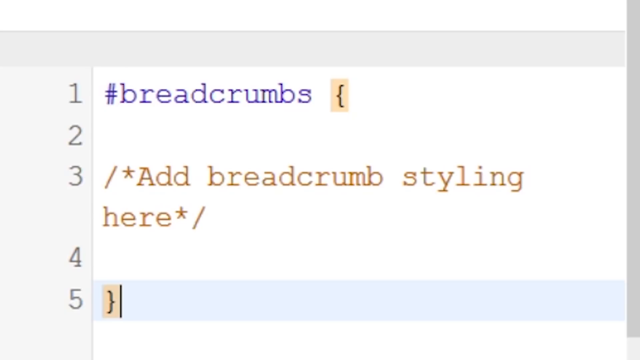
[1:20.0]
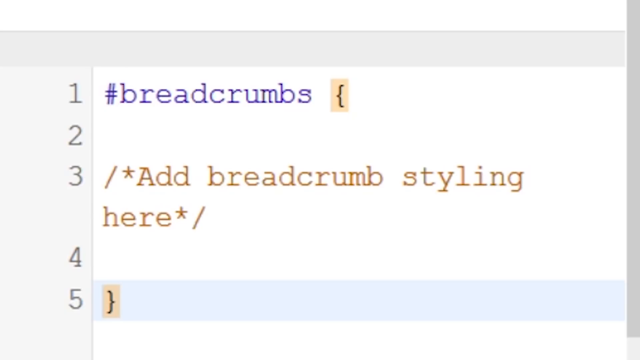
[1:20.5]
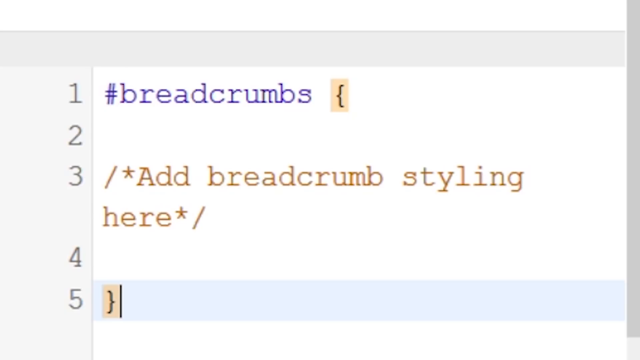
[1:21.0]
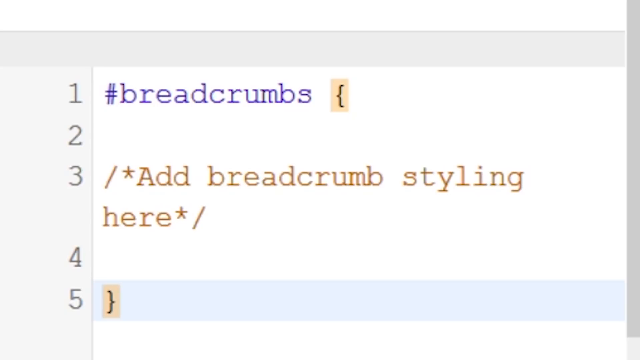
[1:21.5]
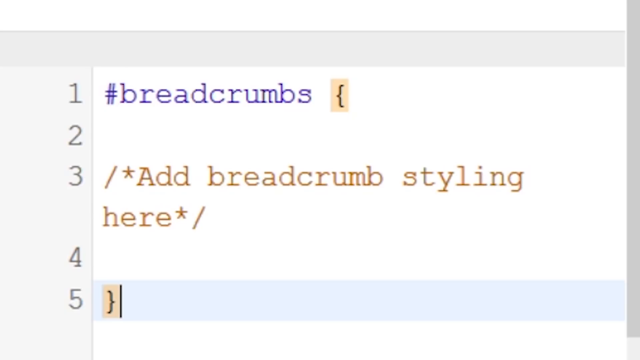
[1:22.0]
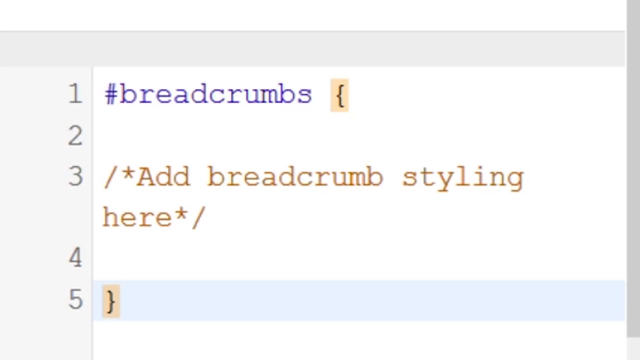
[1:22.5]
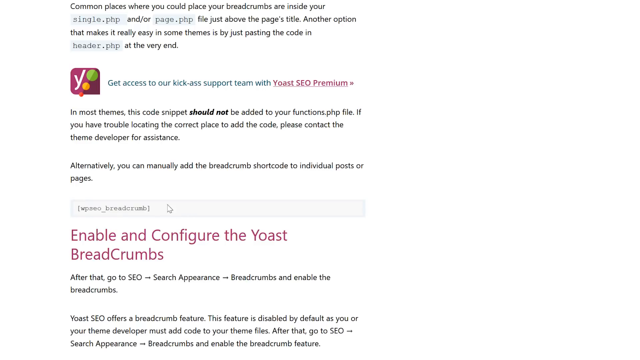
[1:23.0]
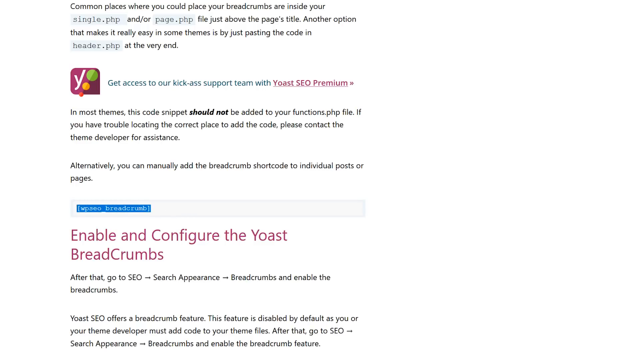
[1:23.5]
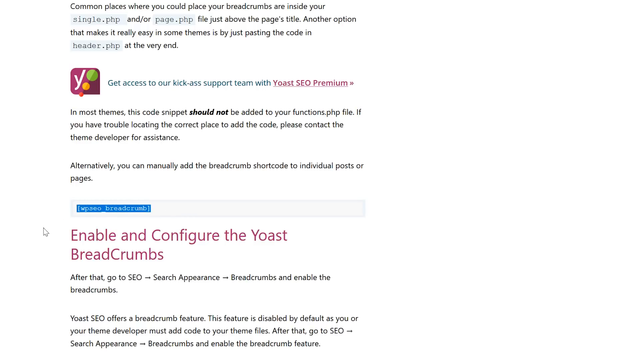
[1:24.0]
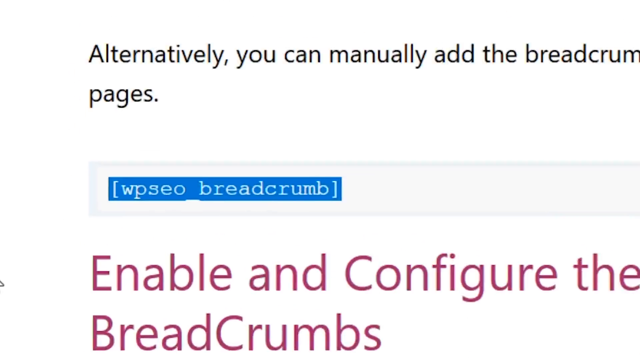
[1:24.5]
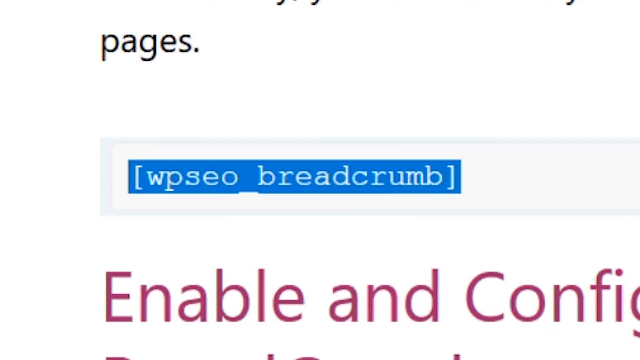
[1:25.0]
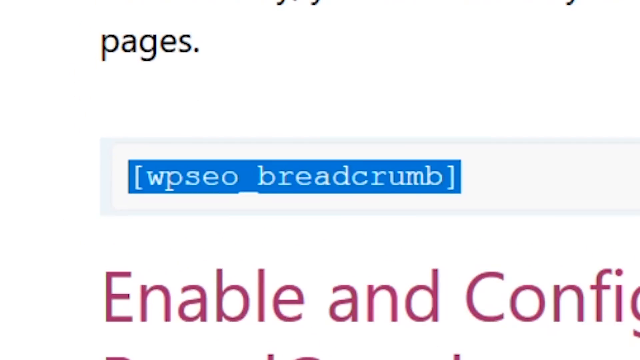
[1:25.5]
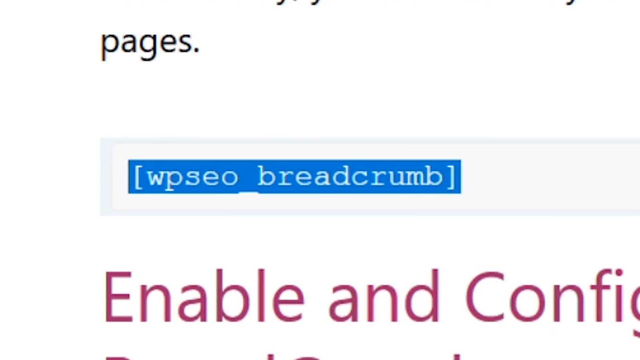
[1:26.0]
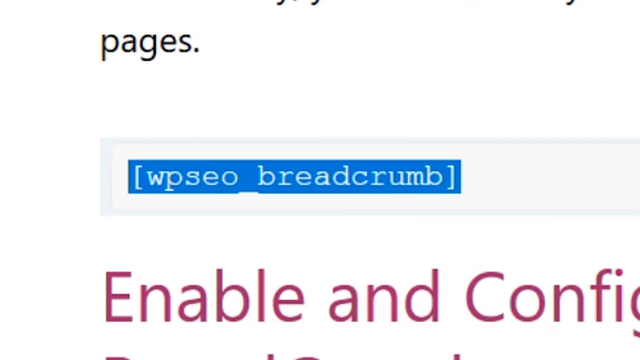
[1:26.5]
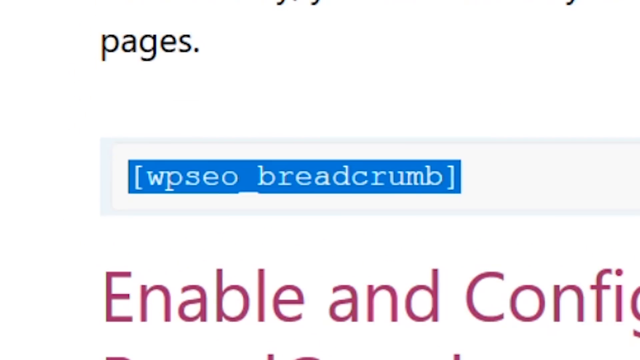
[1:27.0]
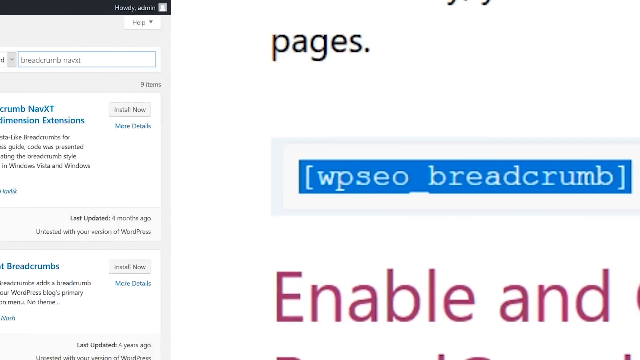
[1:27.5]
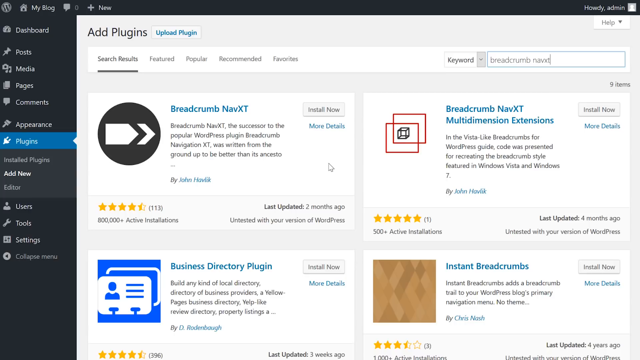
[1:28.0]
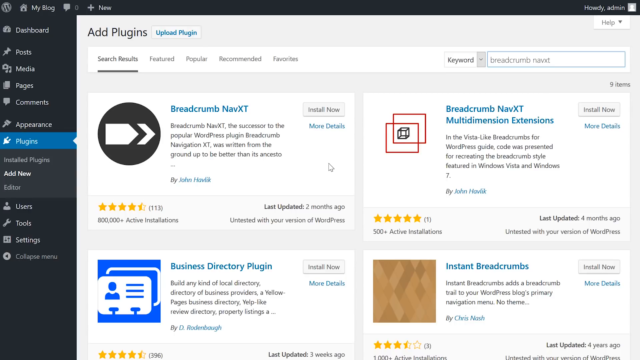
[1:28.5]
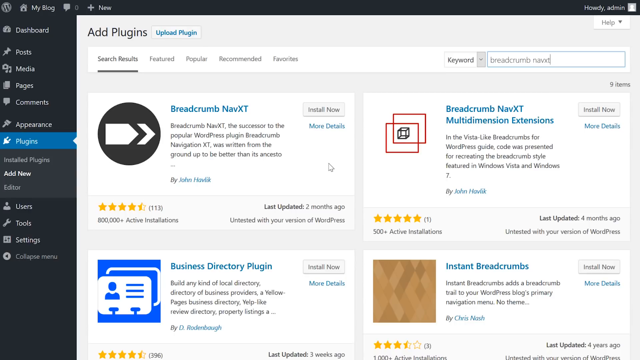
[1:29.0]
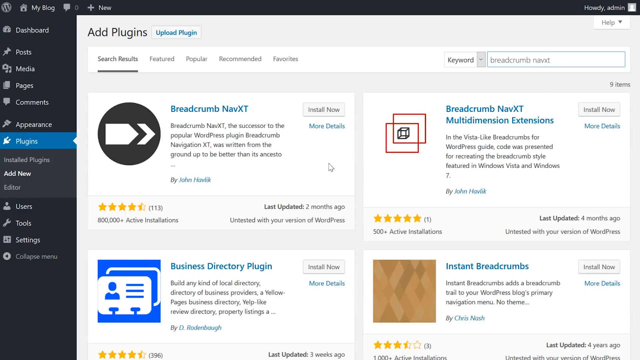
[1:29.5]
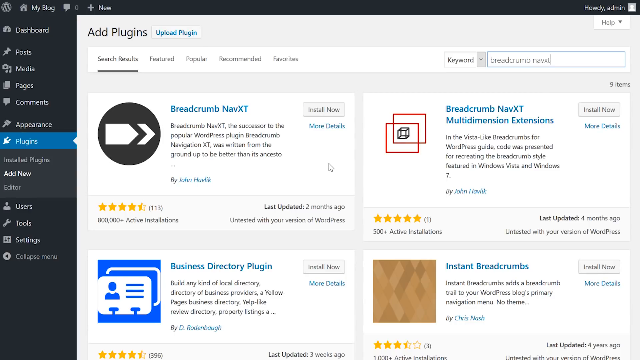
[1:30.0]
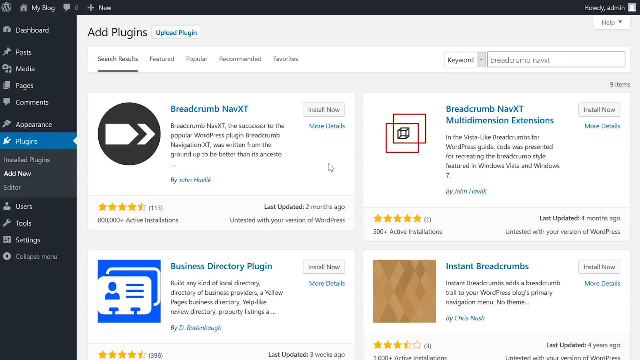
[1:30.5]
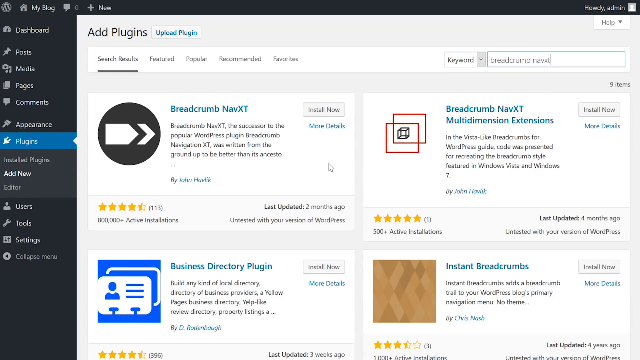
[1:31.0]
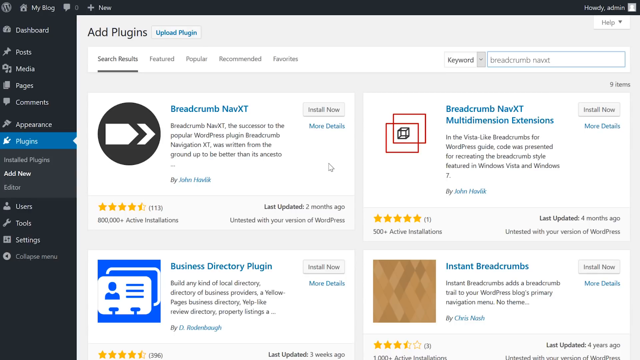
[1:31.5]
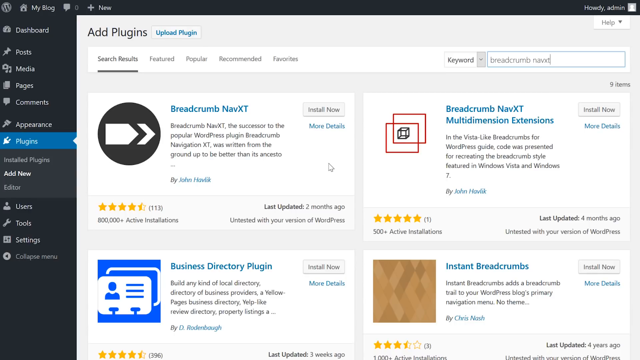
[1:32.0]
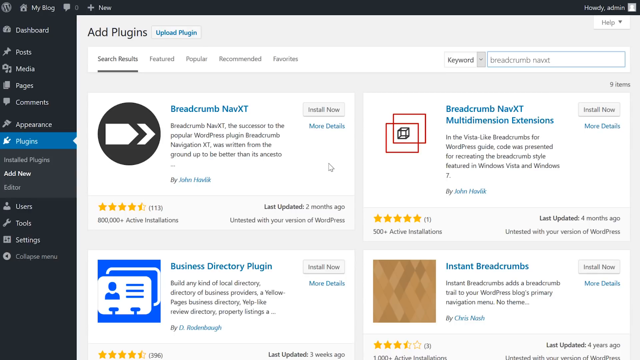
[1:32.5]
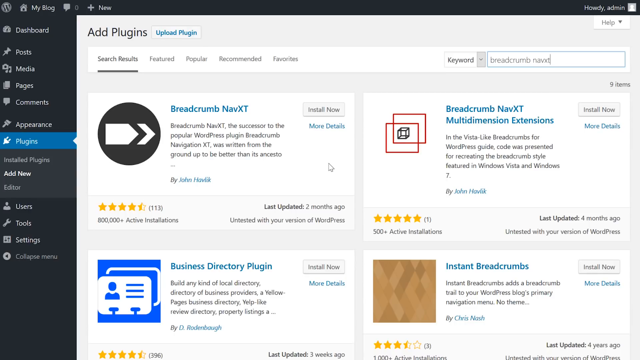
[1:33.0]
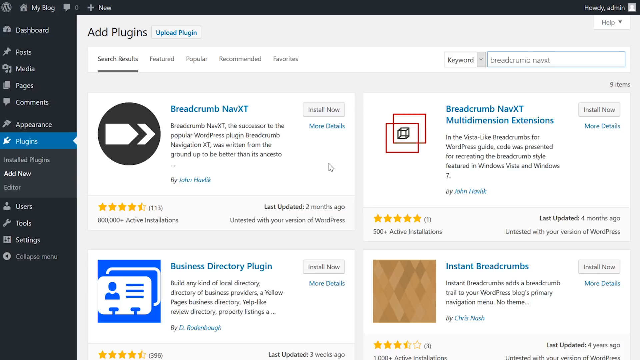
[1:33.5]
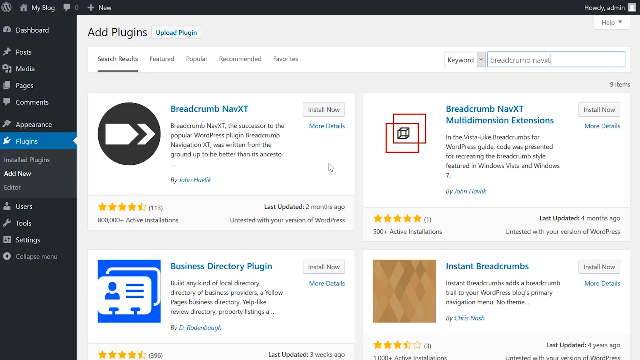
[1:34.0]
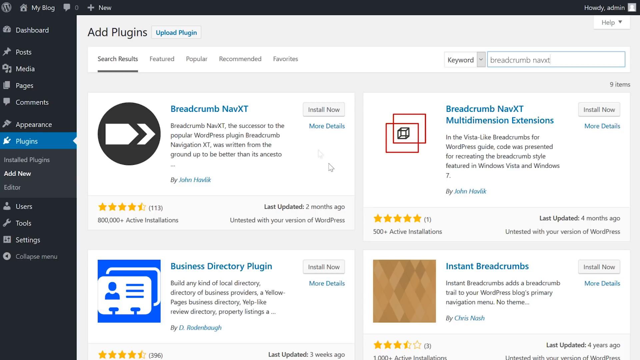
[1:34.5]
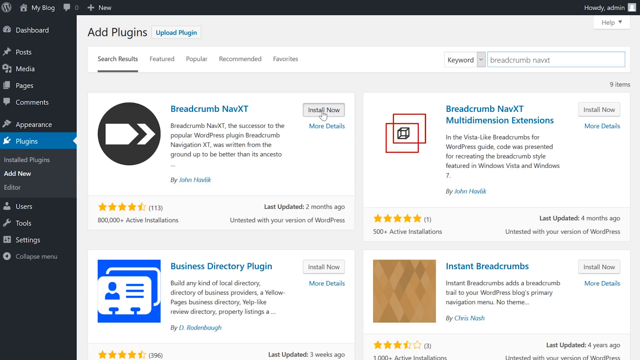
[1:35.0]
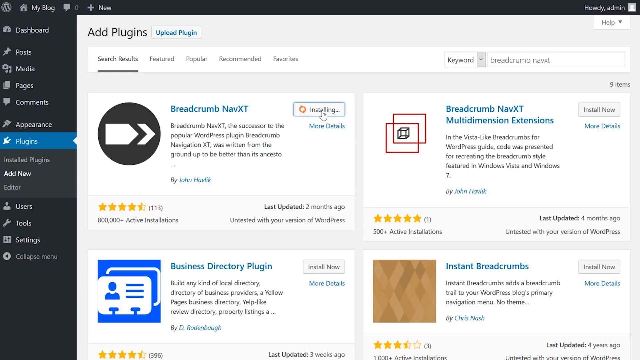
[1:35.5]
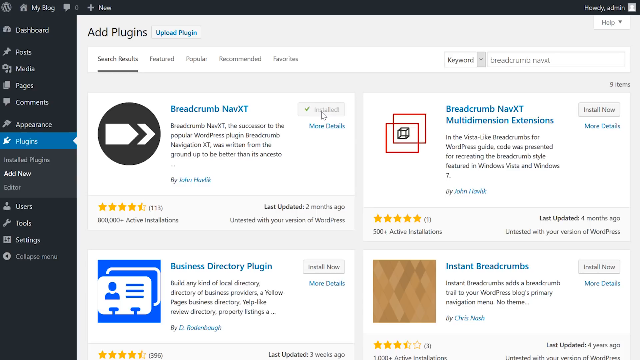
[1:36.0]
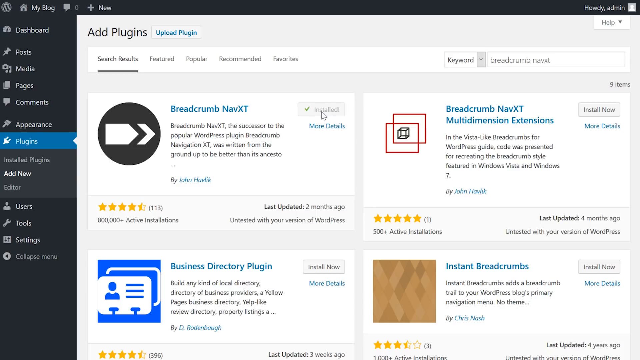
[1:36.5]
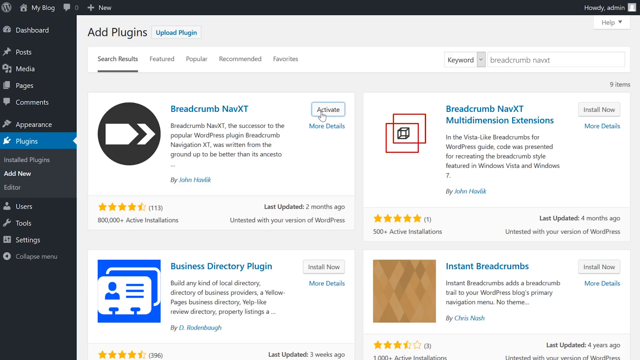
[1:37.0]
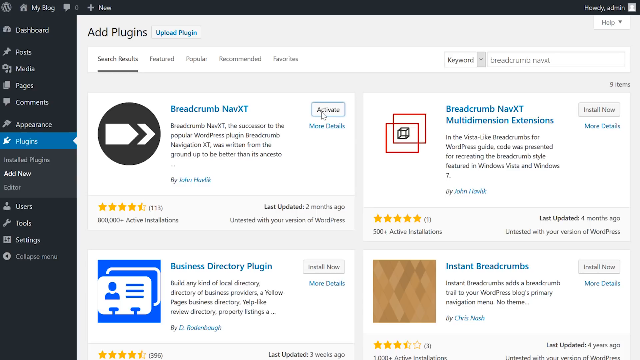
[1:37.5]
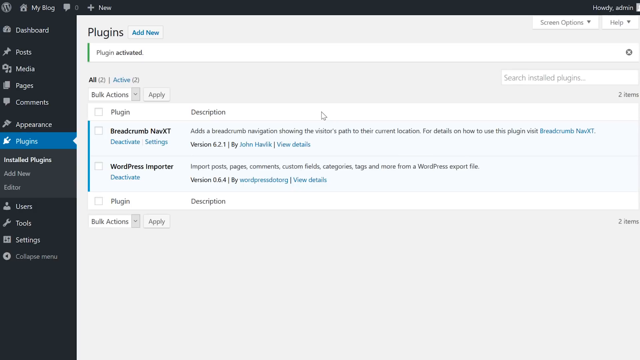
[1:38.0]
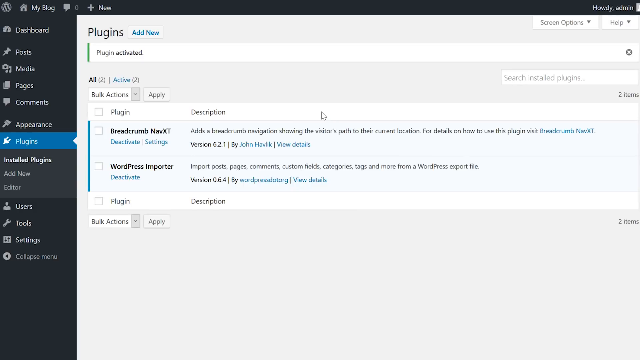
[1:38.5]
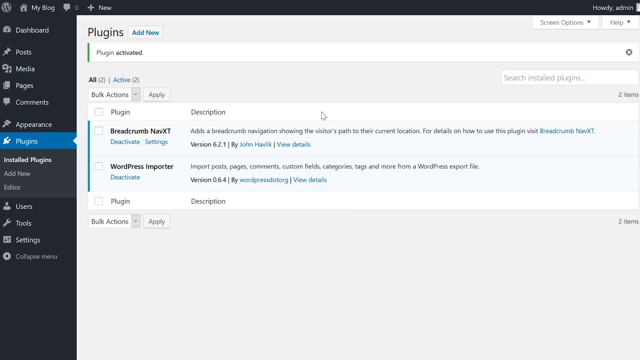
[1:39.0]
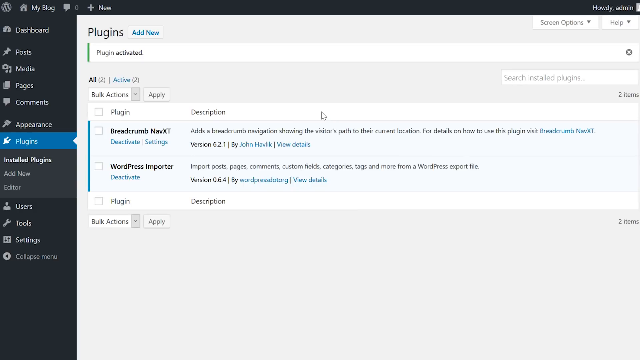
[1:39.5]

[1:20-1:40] Another screen shows a section of text in a small square box, which the user highlights and copies. The page shows that the breadcrumb shortcode can be manually added to individual posts or pages, and the user copies that code. They then go to the Add Plugins section of the WordPress dashboard and search for breadcrumb NAVXT, and multiple plugins pop up. They move the cursor to the install now button and click it; it begins installing and then says it was installed. The activate button appears, the user clicks it, and the screen changes to show that the plugin has been activated.